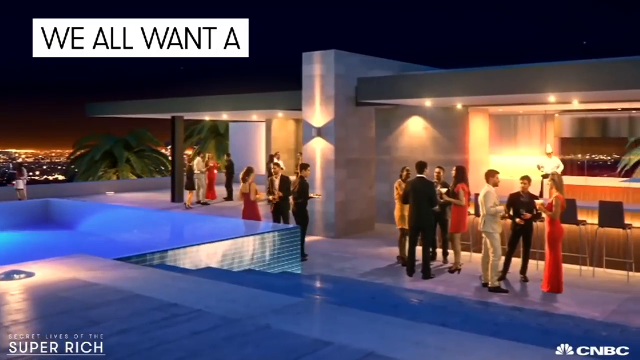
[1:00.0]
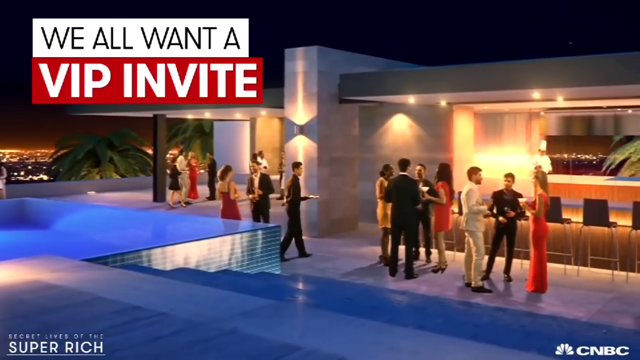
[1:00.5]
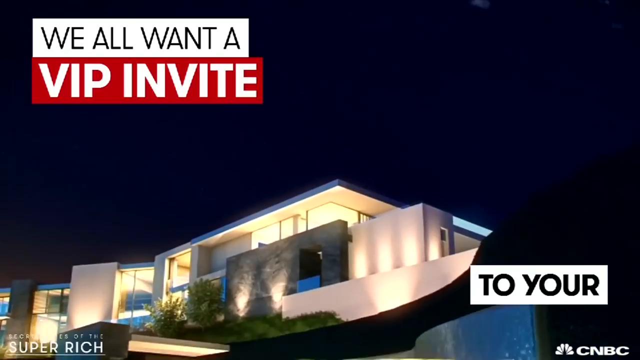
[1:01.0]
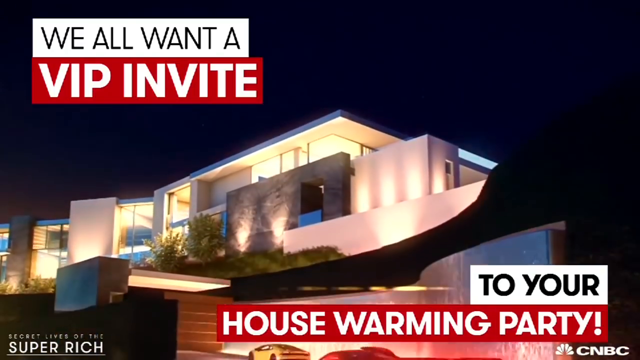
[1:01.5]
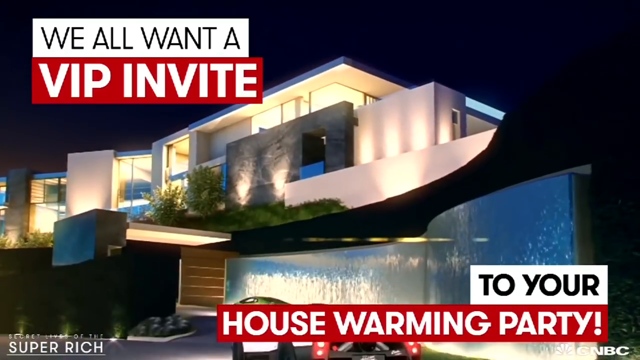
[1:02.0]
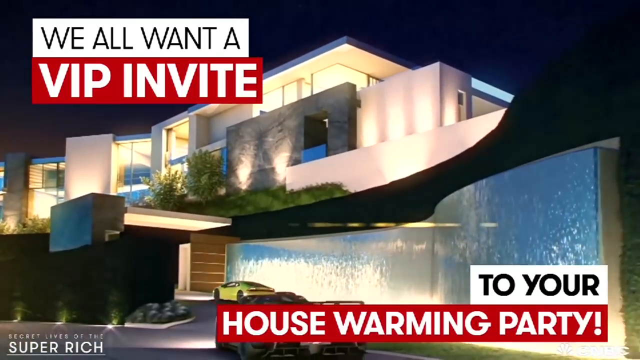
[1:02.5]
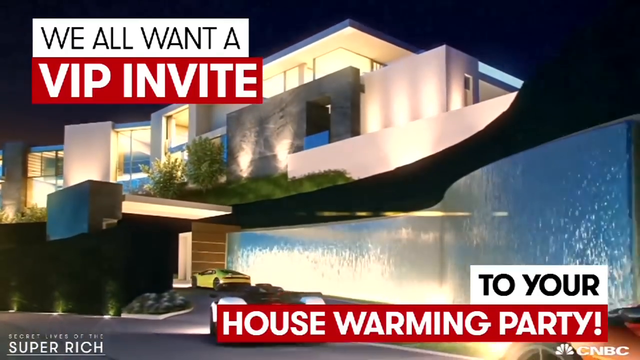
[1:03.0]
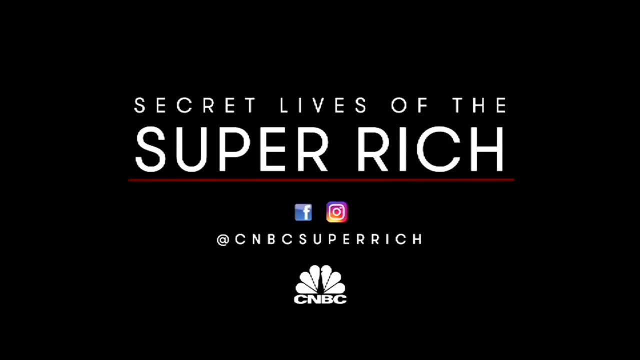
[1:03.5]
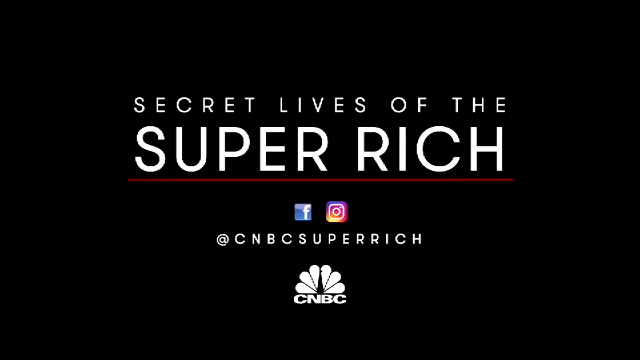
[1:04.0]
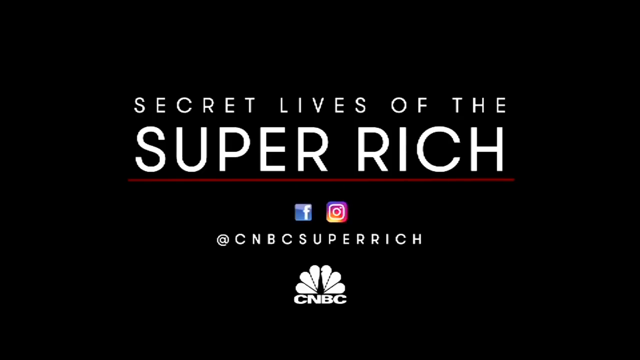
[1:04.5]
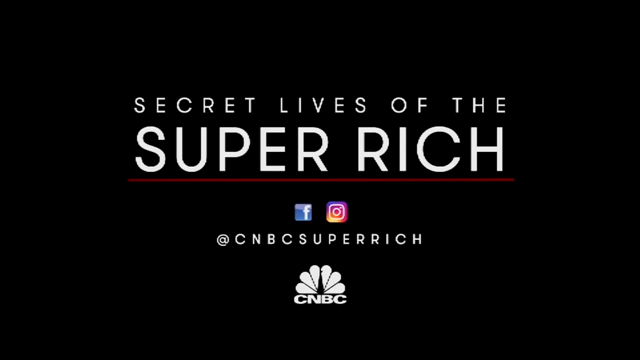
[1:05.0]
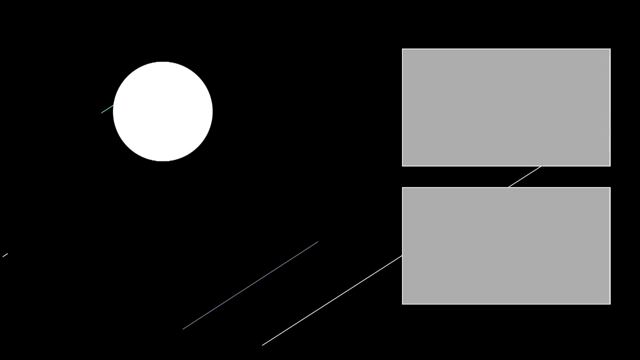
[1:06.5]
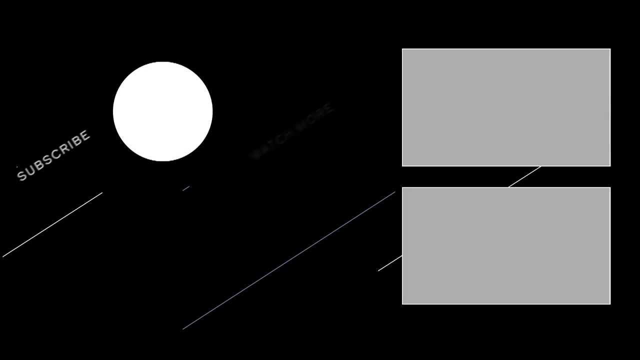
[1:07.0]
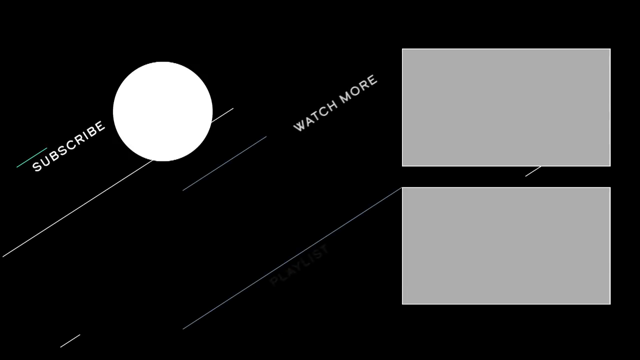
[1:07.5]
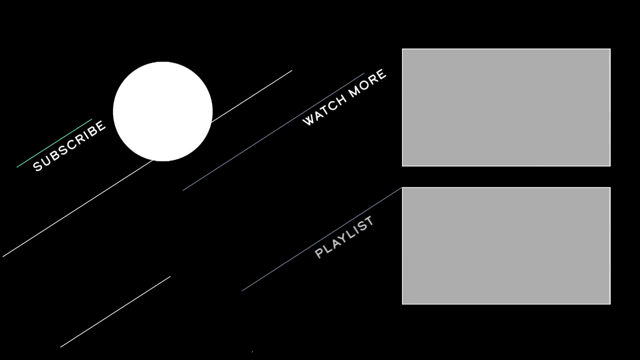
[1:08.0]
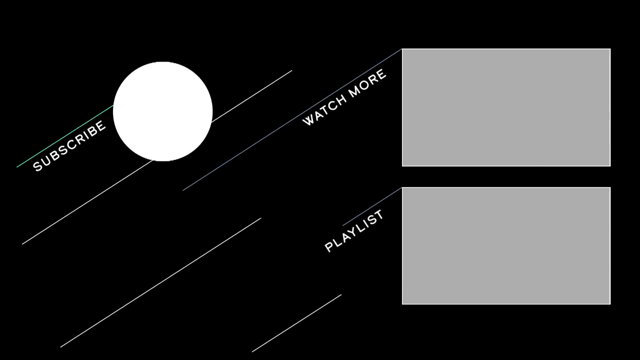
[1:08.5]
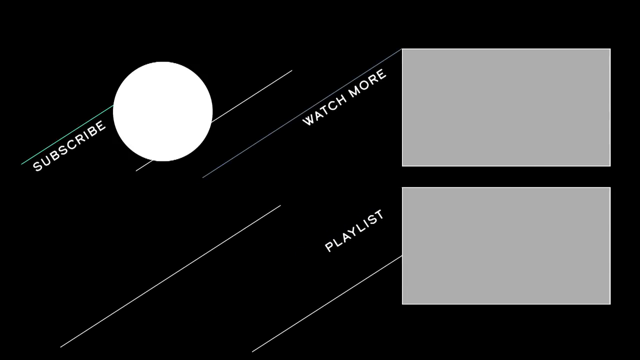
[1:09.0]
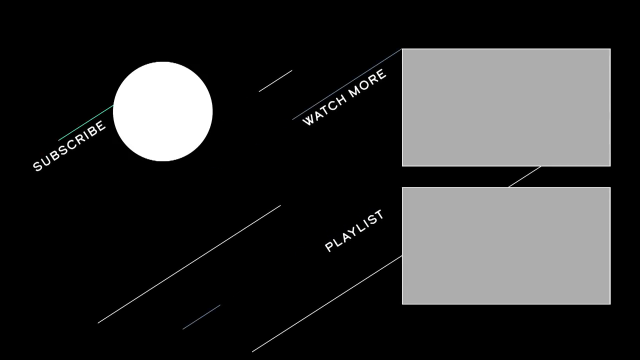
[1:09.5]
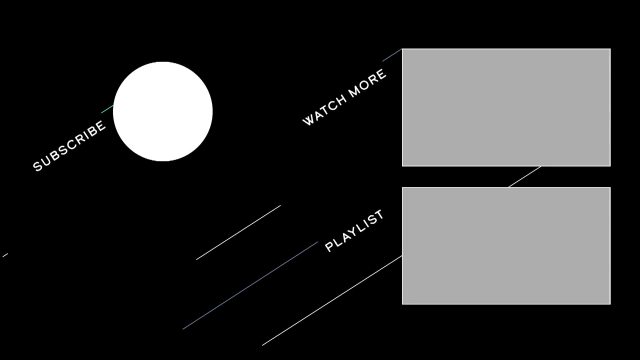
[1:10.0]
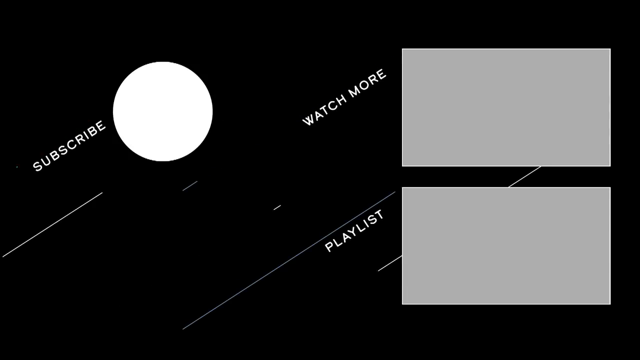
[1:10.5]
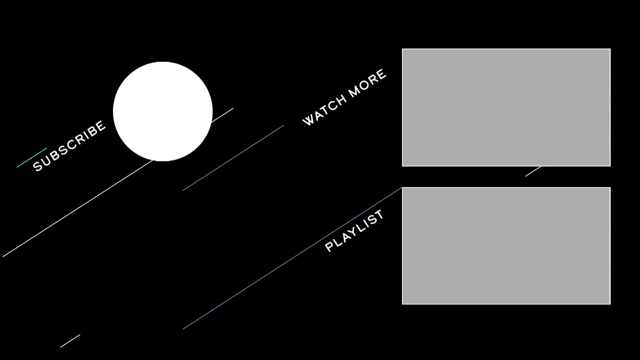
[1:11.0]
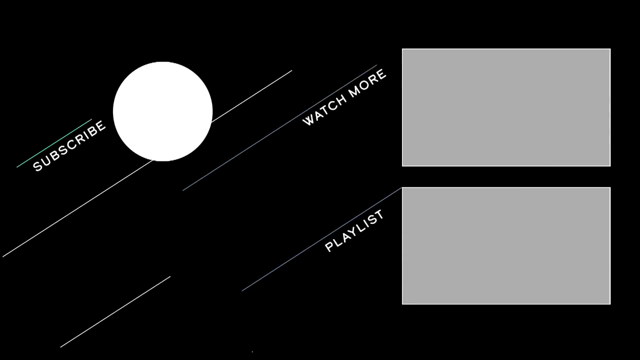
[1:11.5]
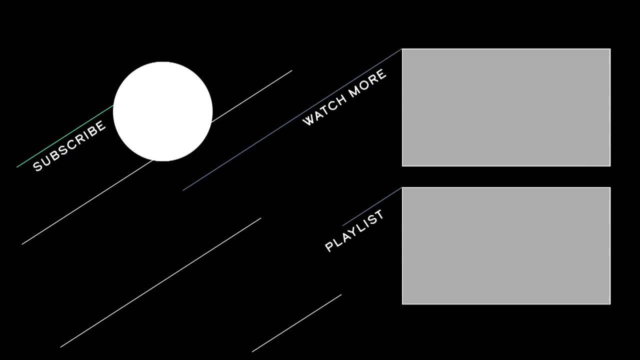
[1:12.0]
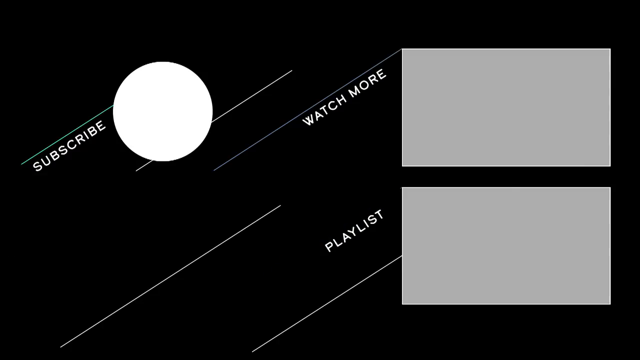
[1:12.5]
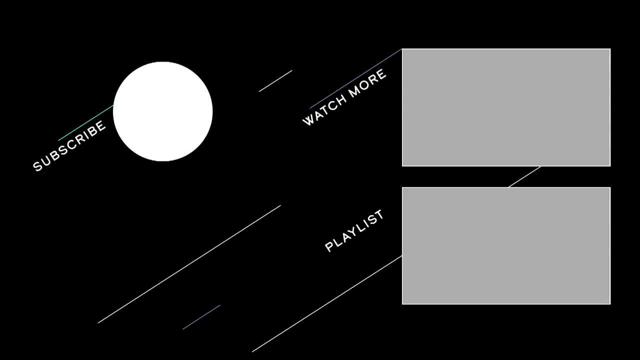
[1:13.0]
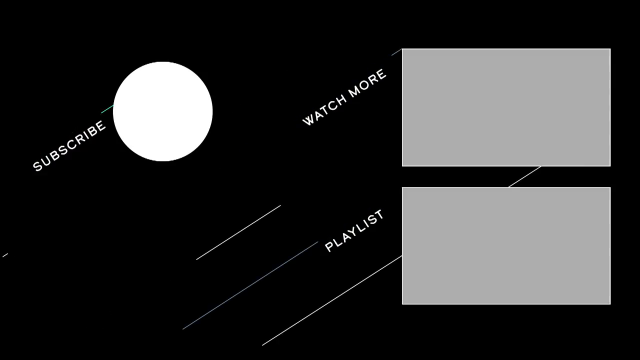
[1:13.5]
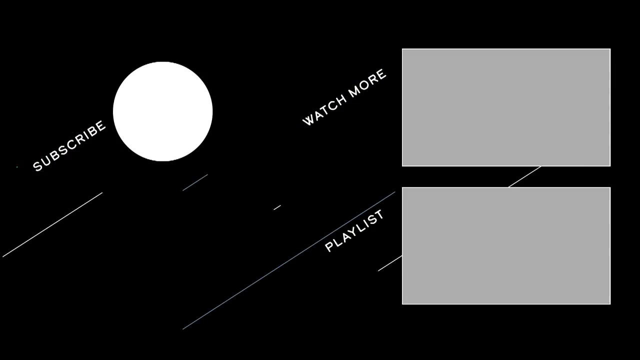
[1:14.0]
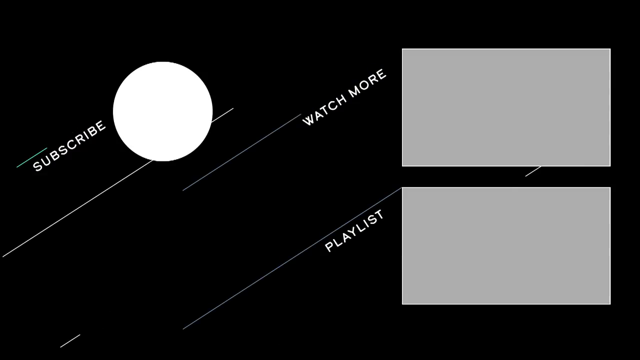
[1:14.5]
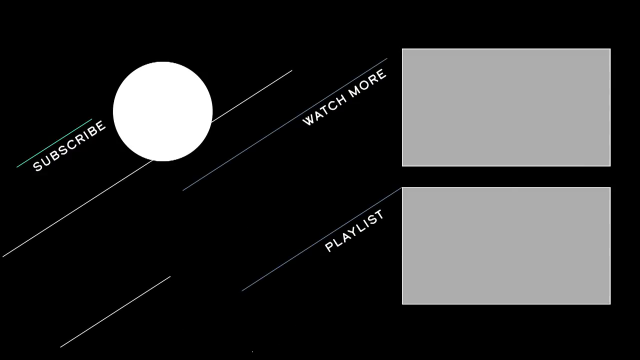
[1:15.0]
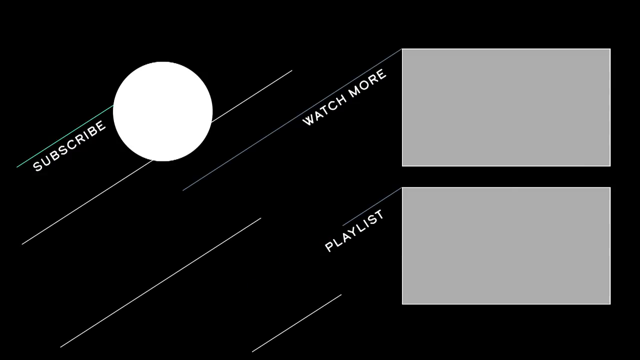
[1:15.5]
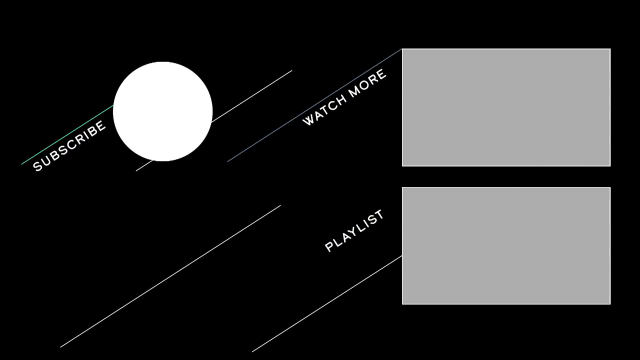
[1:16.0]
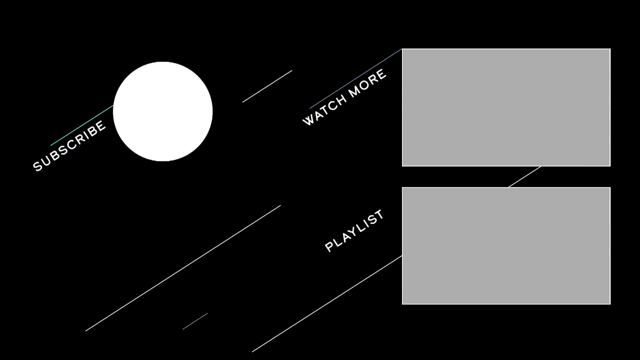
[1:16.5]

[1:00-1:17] Words on the screen say "we all want a VIP invite to our own party". Multiple cars come into the underground parking area of the home: a yellow car, followed by a white sports car driving in after it. More shots show the partygoers attending the party, all of whom appear to be dressed up and enjoying what looks like a very formal housewarming or cocktail party. At the end there are encouragements to subscribe and watch.